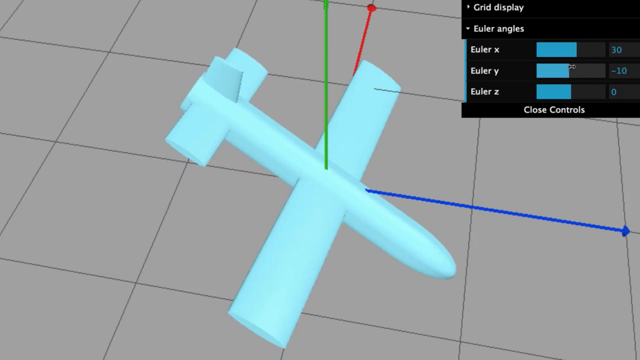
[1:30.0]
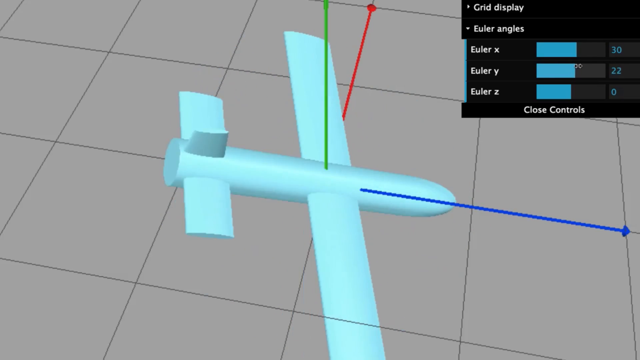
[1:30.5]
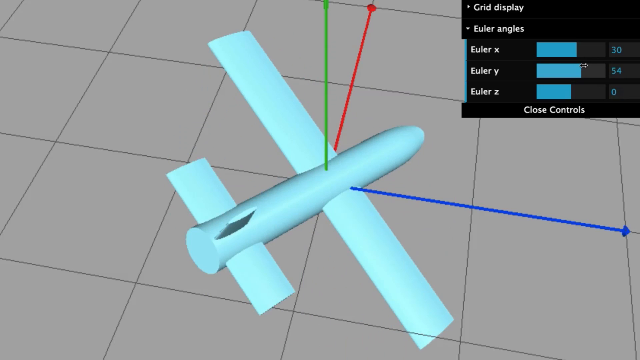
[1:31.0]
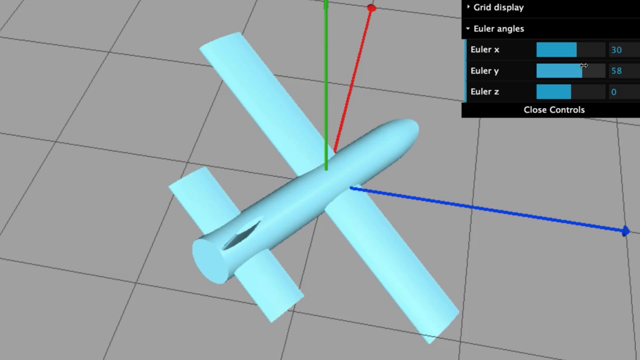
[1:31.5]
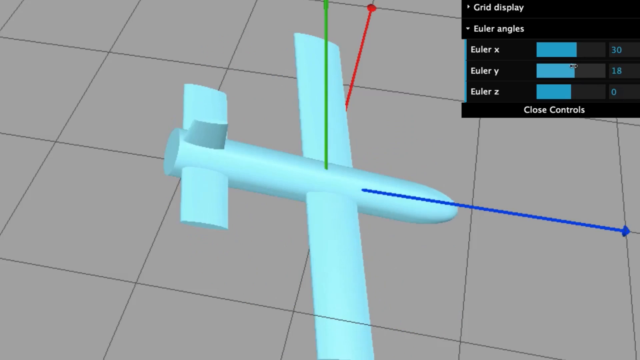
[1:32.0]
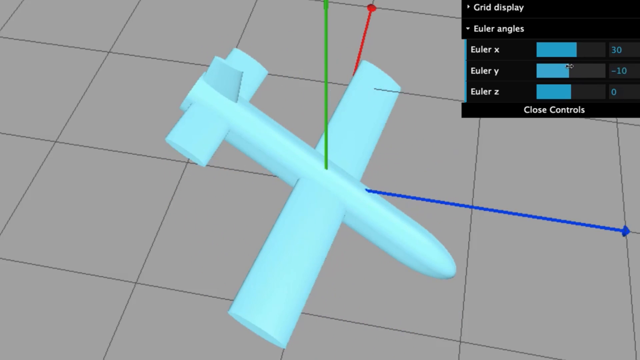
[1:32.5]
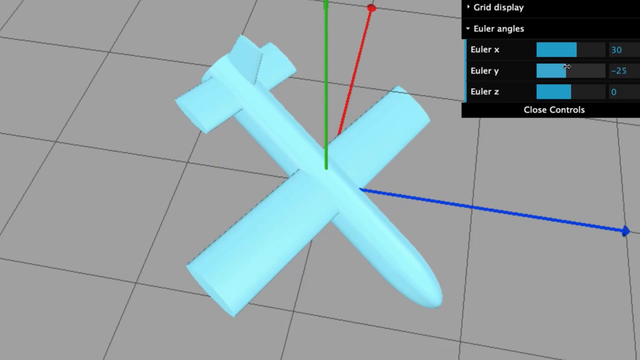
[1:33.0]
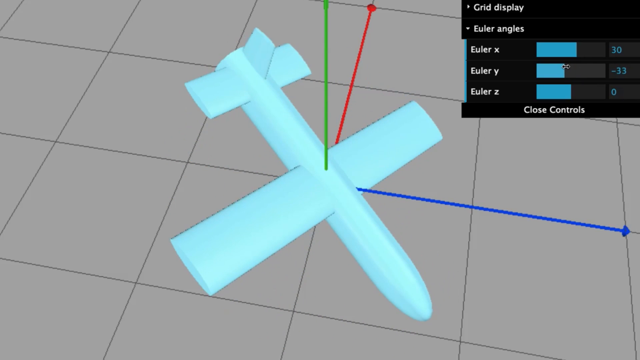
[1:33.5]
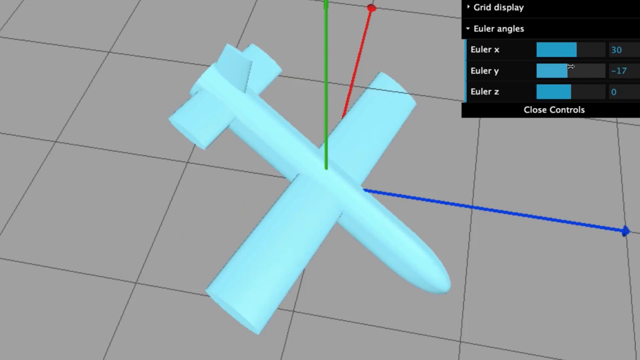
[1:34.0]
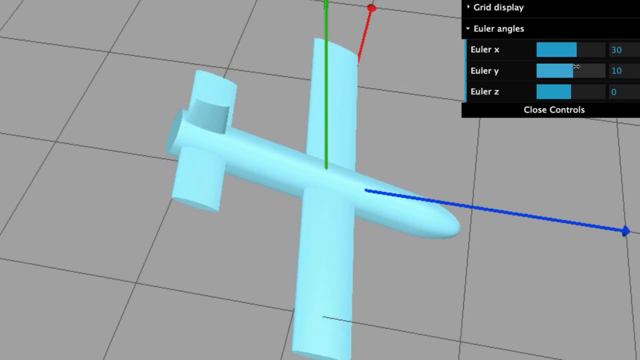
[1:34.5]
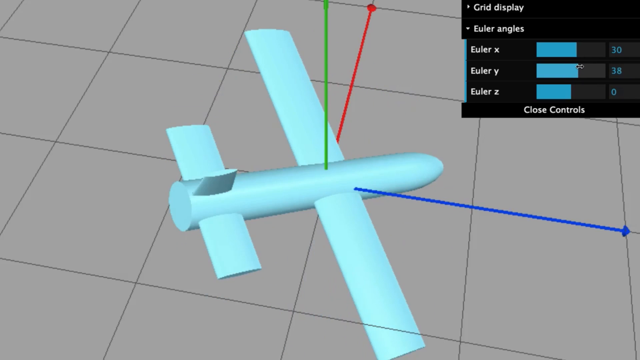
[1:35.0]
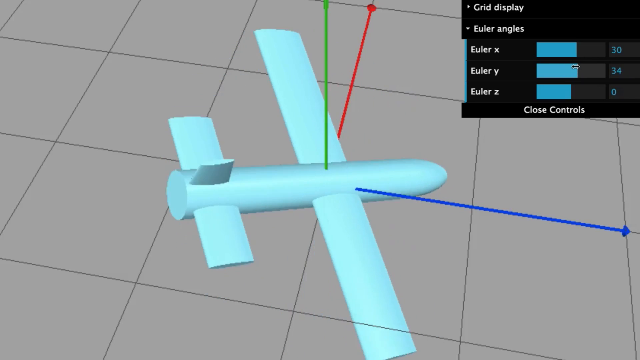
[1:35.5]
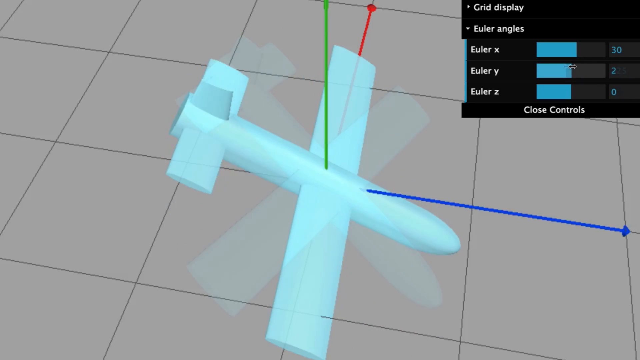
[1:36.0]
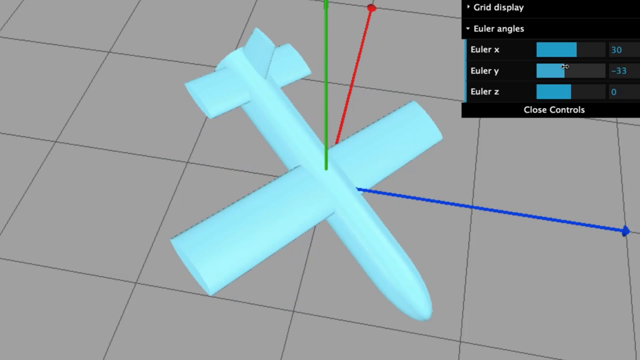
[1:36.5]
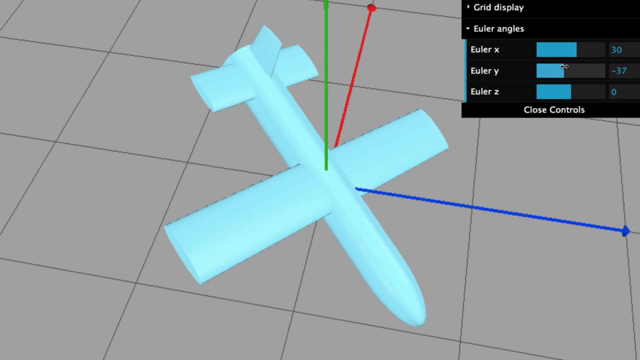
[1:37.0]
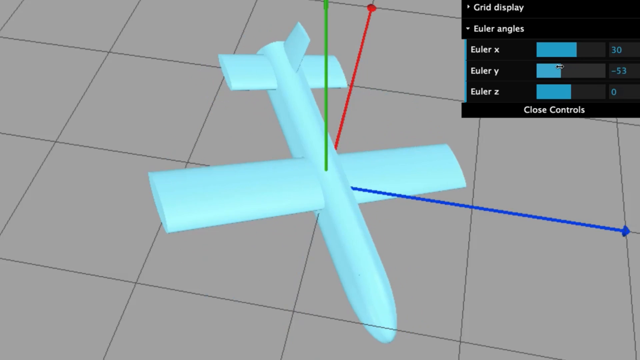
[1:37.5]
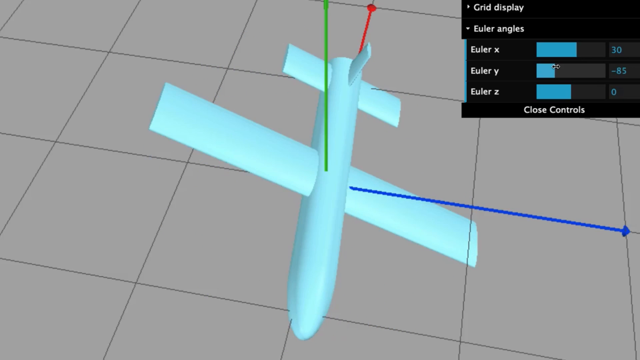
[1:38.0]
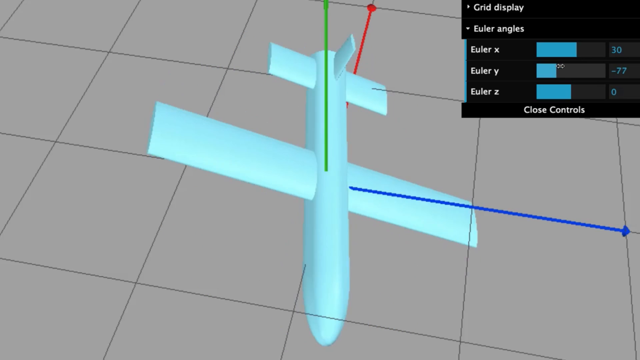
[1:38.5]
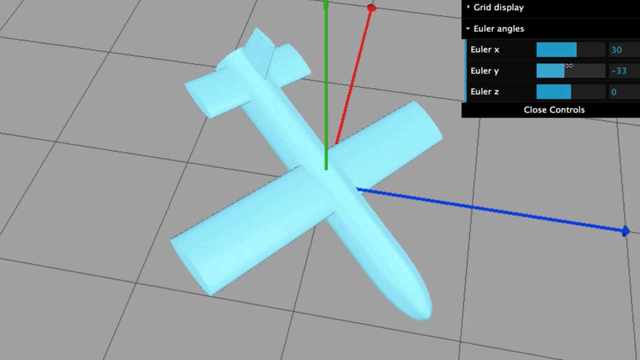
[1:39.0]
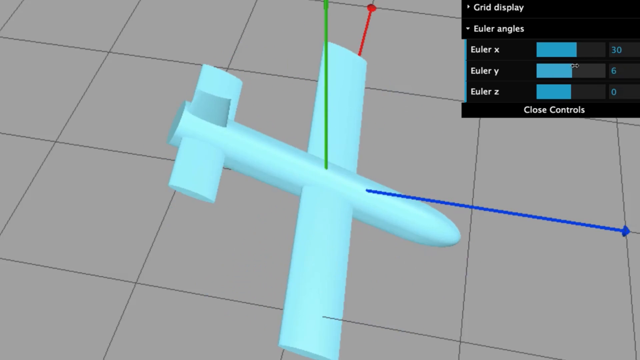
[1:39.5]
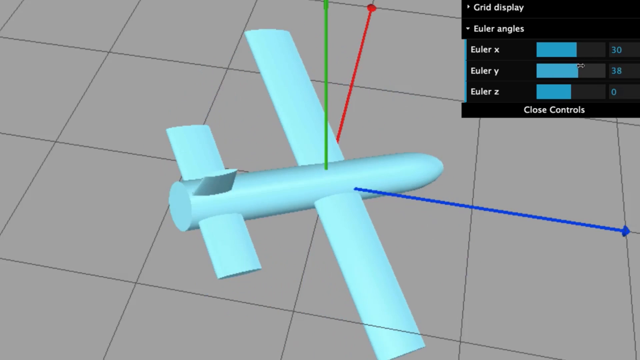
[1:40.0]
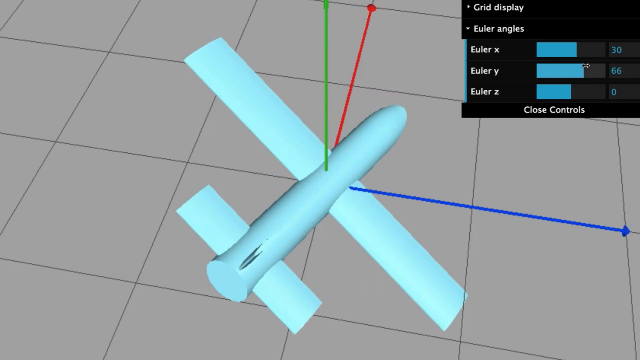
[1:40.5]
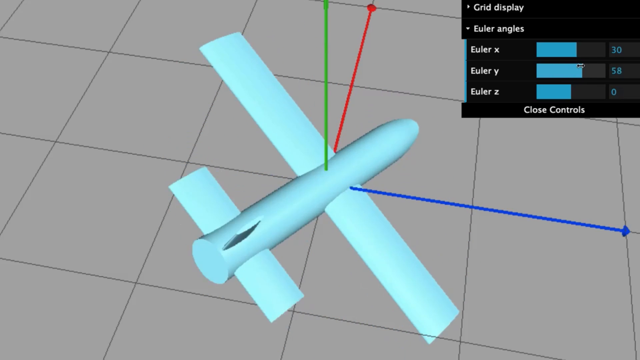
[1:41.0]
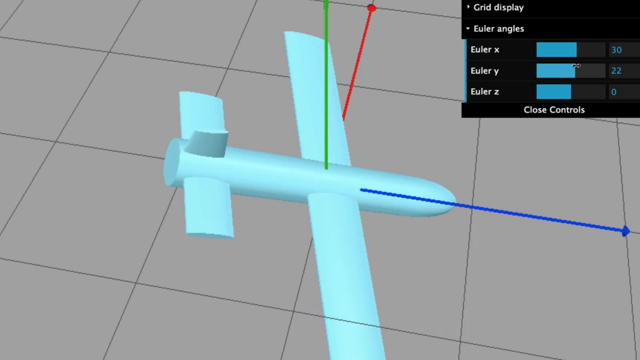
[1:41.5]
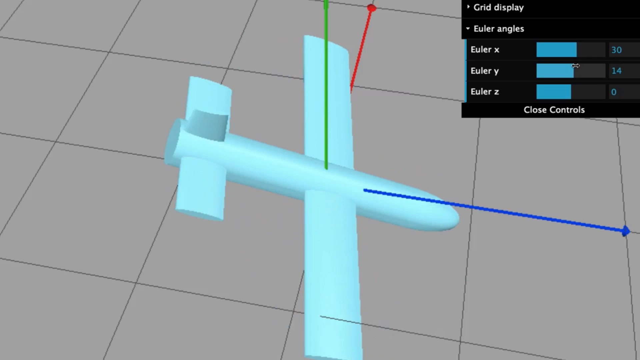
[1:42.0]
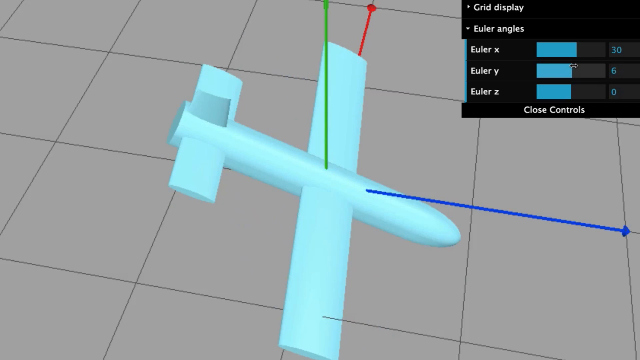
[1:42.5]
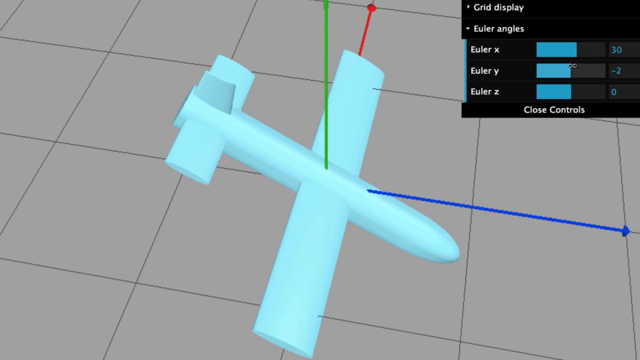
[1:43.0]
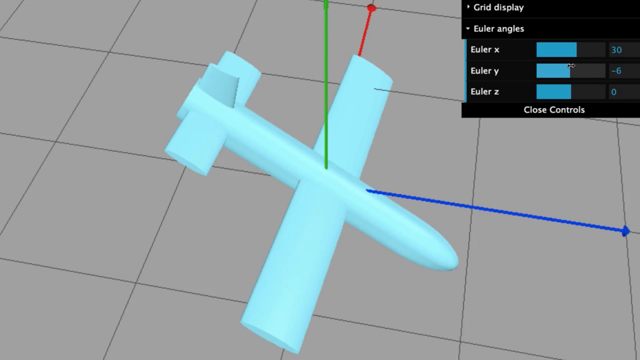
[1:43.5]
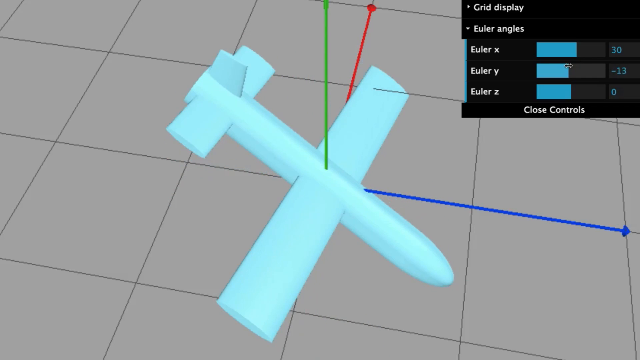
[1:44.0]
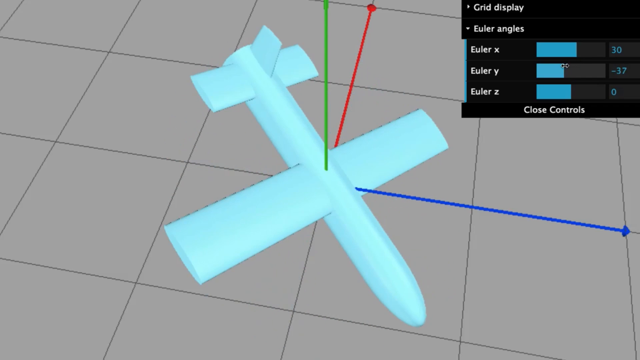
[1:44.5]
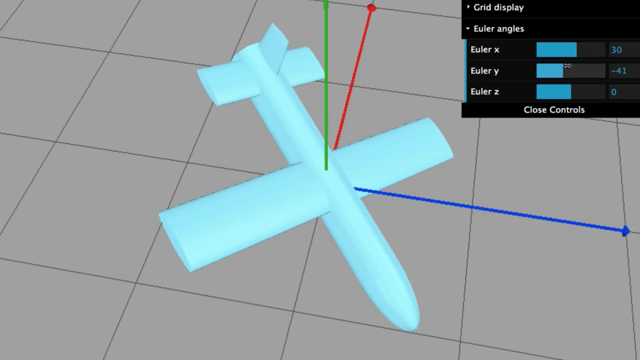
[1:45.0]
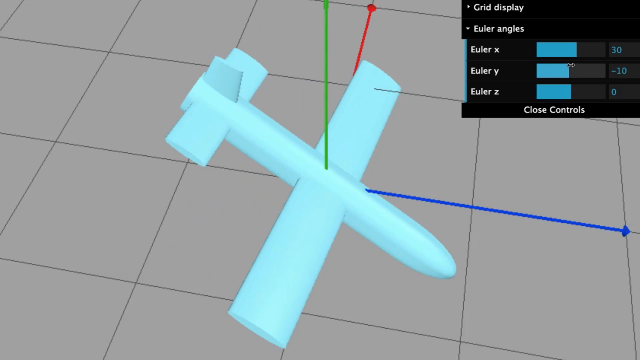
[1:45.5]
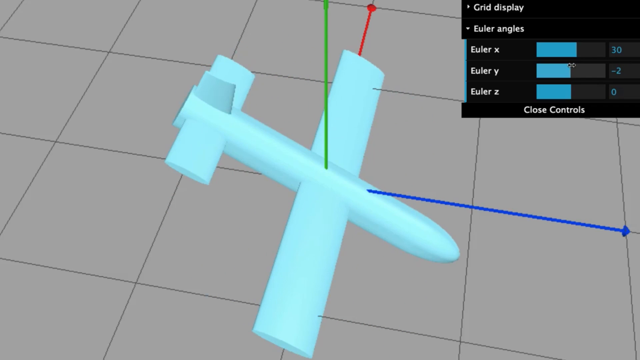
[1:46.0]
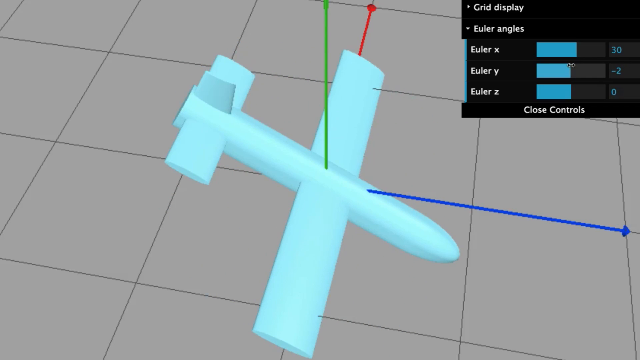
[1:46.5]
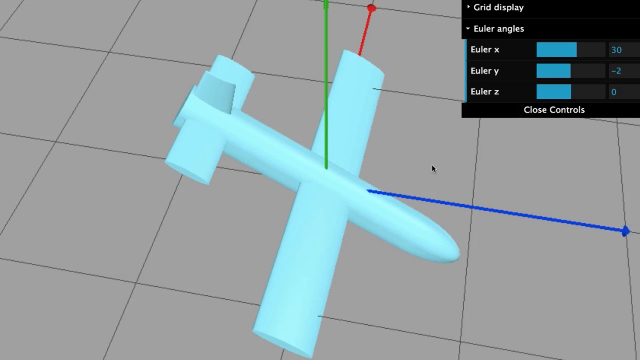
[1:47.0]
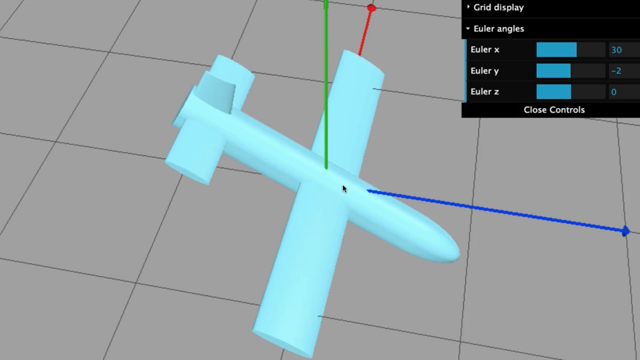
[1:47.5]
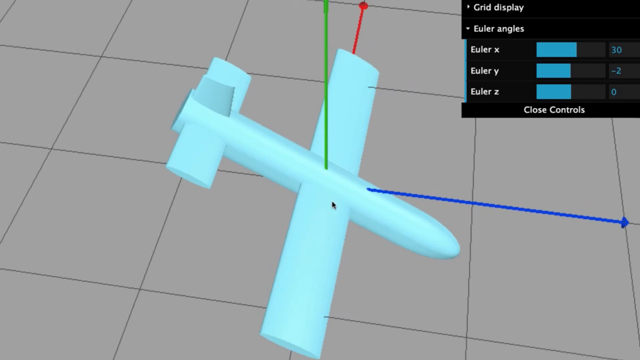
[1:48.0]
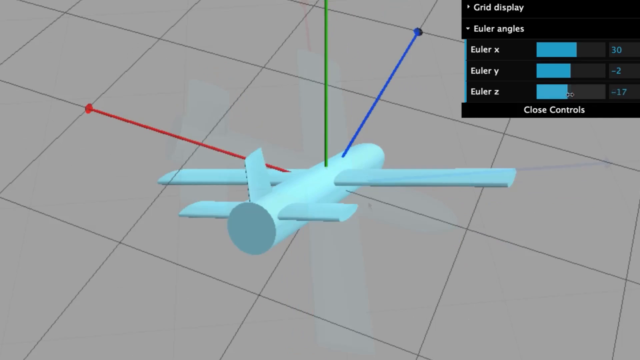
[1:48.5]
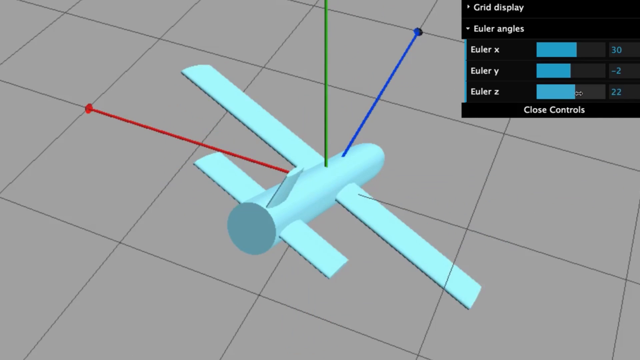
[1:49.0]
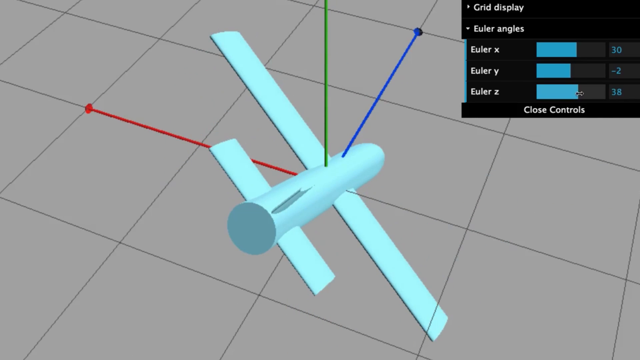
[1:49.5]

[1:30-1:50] The whole screen is made up of light gray squares. In the middle is a baby blue shape that looks like an airplane: a tube for the body, two long skinny rectangles that look like wings, one off the left side and one off the right, and at the end two smaller wings with a fin on top. Someone controls it with a pointer, bringing it onto the screen and twisting it so it can be seen from all different angles. A green line touches the top of the airplane and goes up off the top of the screen, a blue line touches the side of the plane and goes off the right side of the screen, and a red line comes down and touches it. In the top right-hand corner is another, black screen with "grid display" in white at the very top, and beneath it a list reading "Euler angles", "Euler X", "Euler Y" and "Euler Z". To the right of these are rectangles half filled with light blue and half black. Along the bottom of that screen, in white, is "close controls".